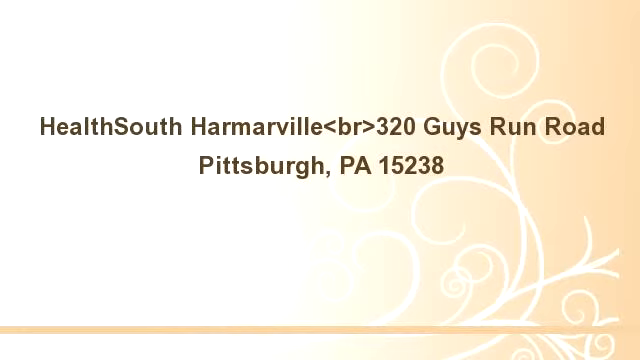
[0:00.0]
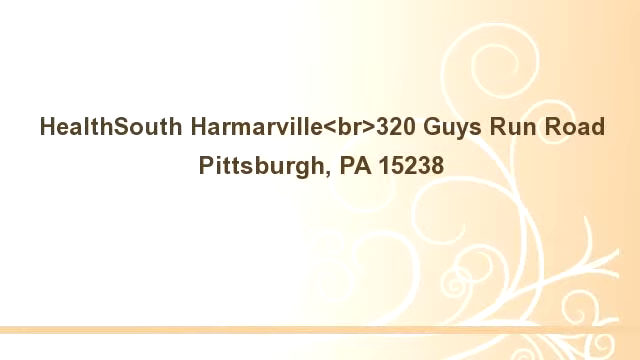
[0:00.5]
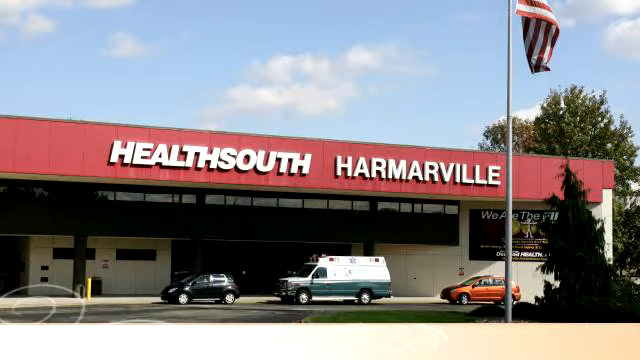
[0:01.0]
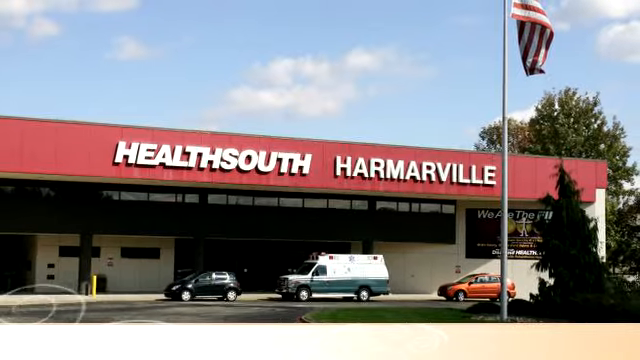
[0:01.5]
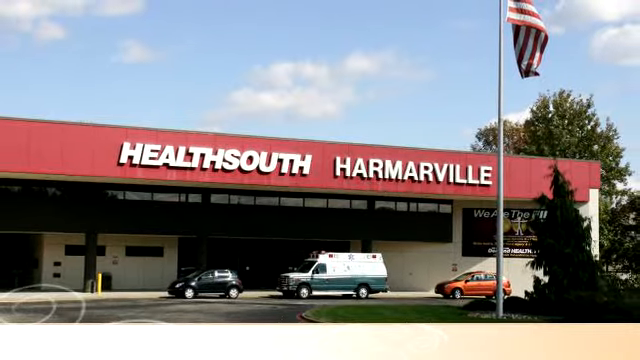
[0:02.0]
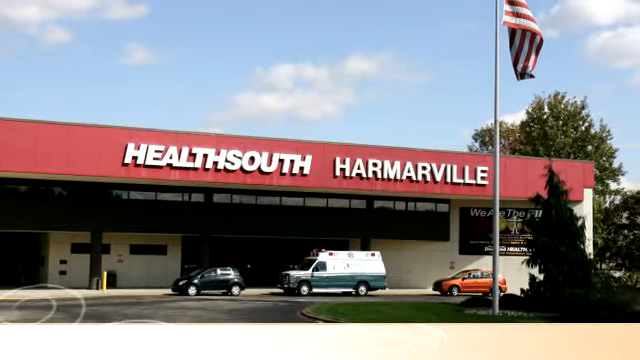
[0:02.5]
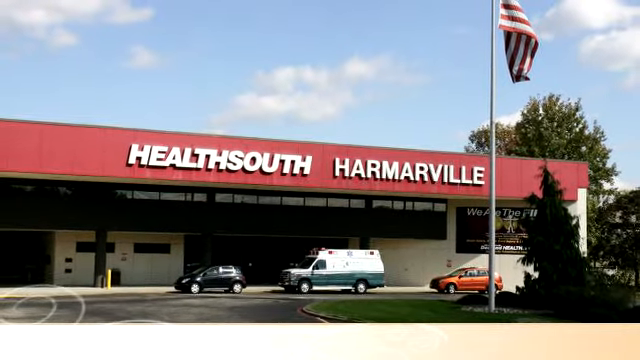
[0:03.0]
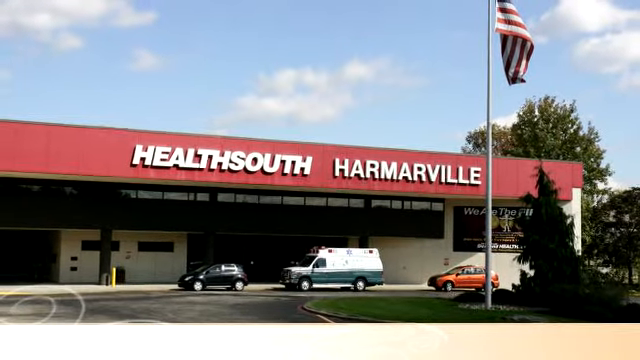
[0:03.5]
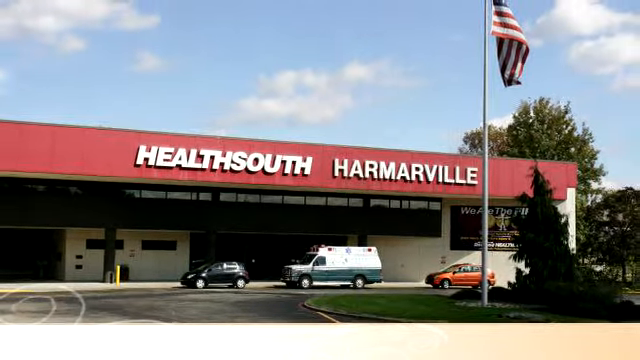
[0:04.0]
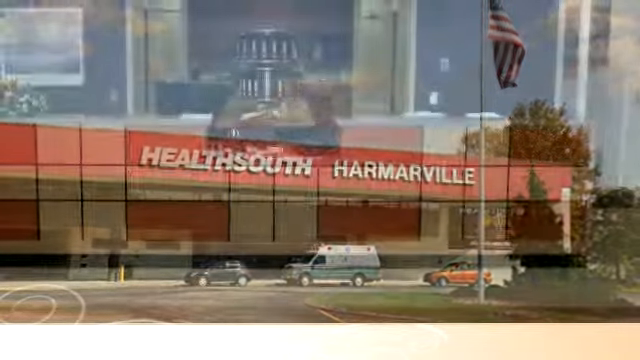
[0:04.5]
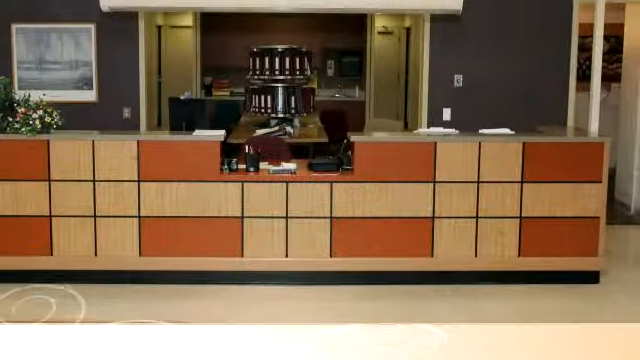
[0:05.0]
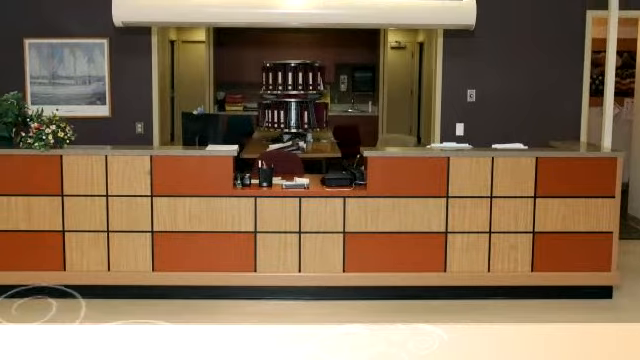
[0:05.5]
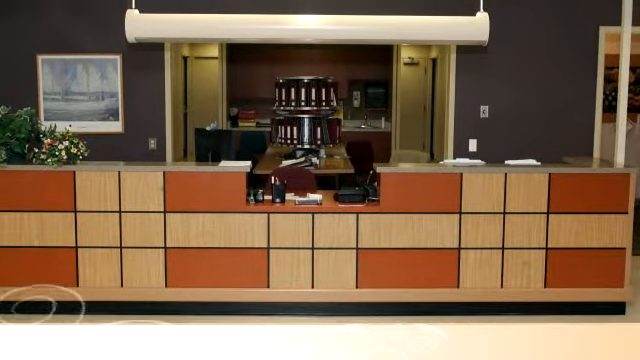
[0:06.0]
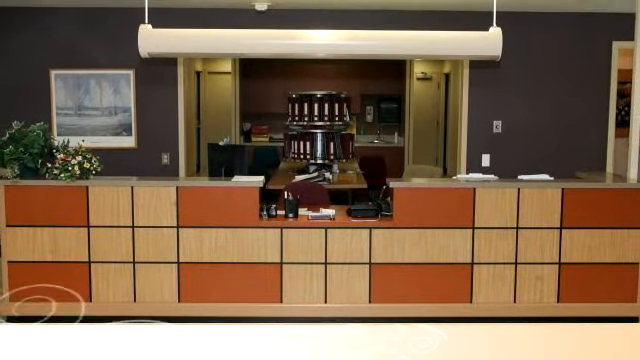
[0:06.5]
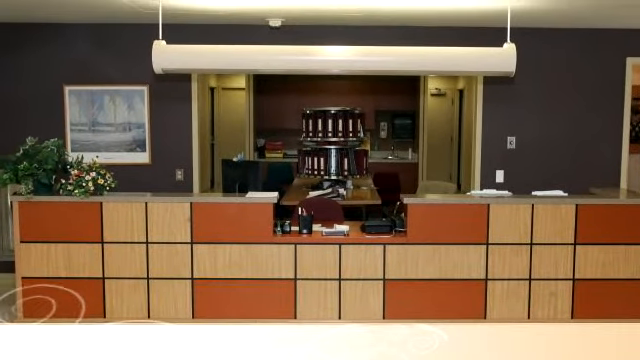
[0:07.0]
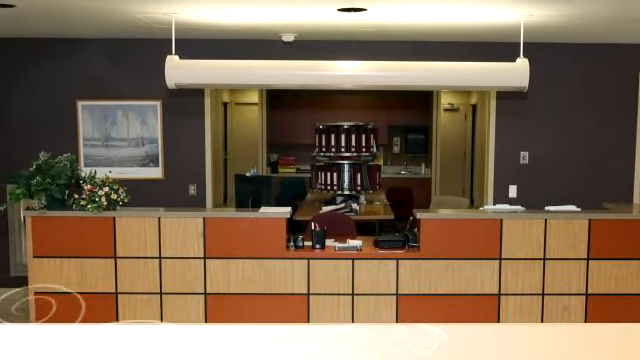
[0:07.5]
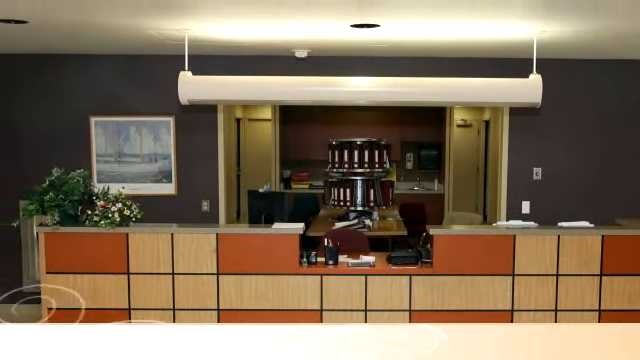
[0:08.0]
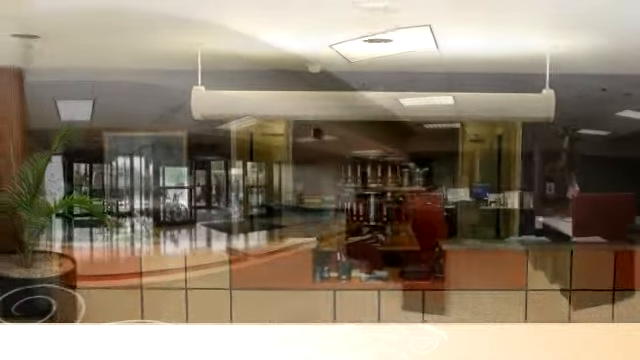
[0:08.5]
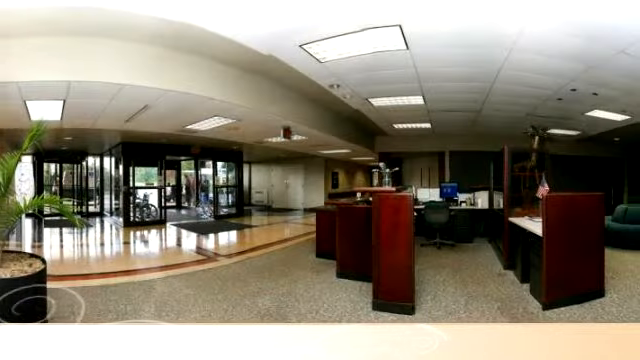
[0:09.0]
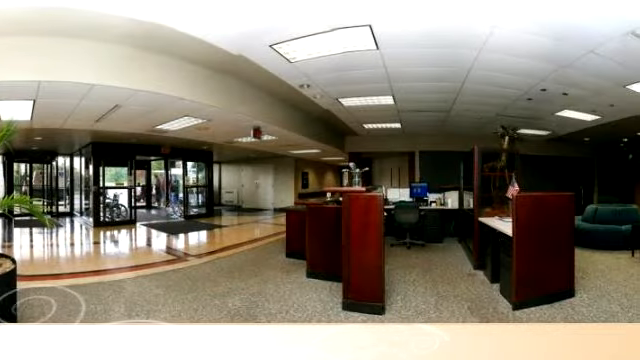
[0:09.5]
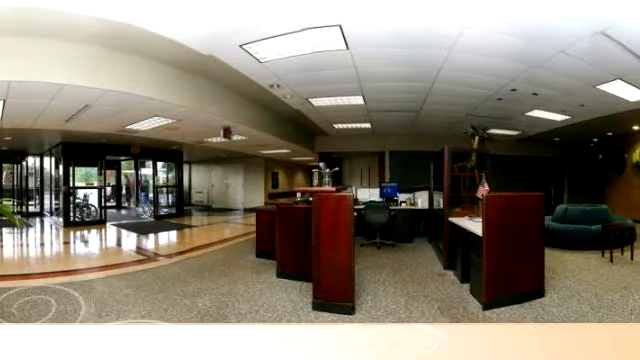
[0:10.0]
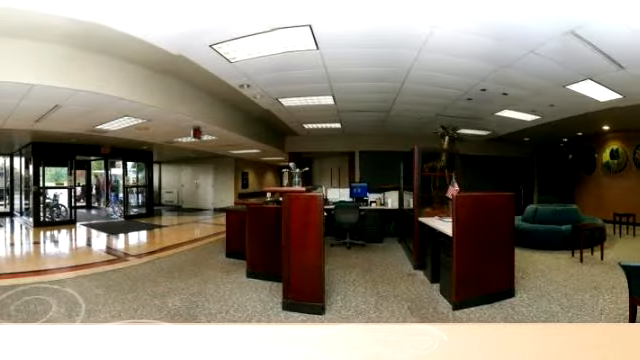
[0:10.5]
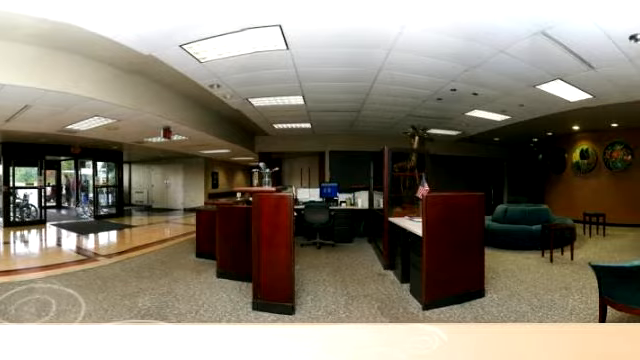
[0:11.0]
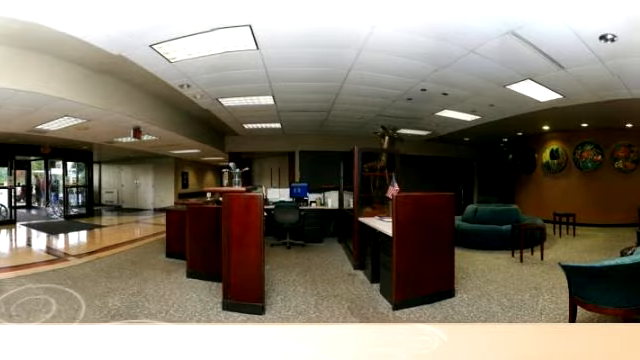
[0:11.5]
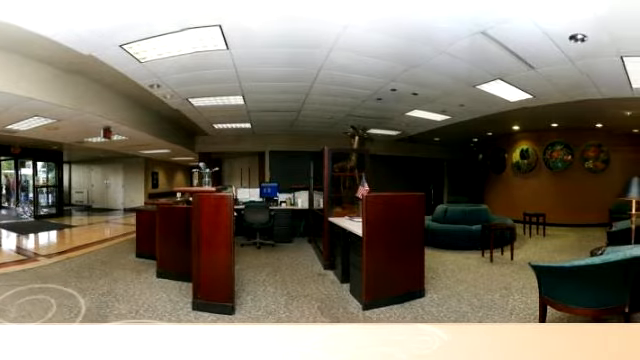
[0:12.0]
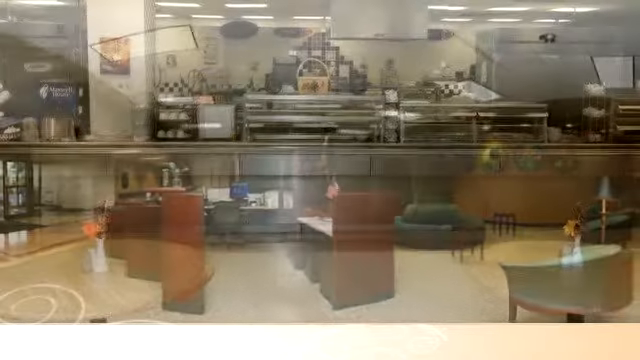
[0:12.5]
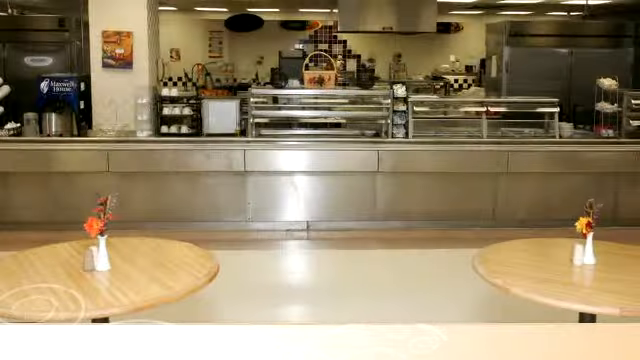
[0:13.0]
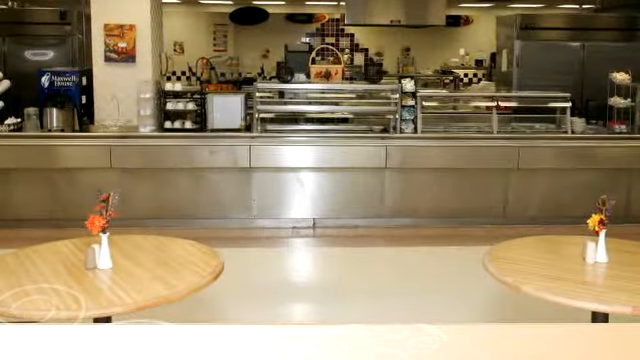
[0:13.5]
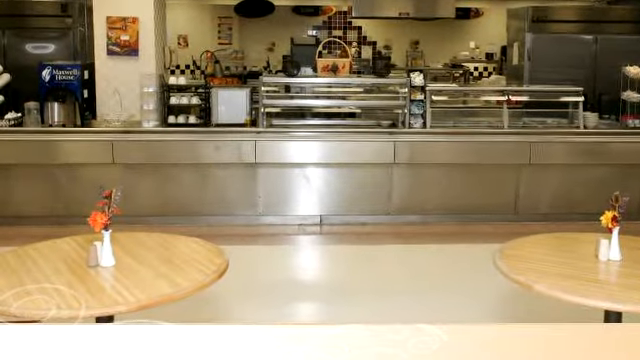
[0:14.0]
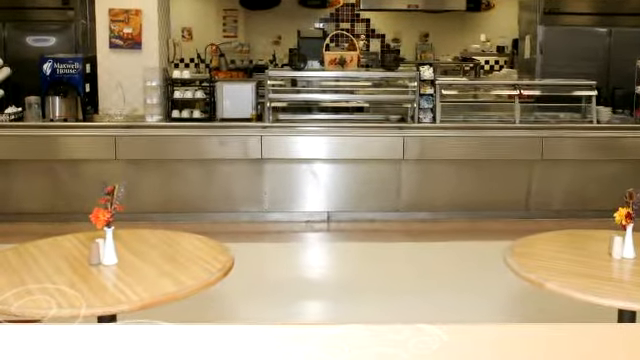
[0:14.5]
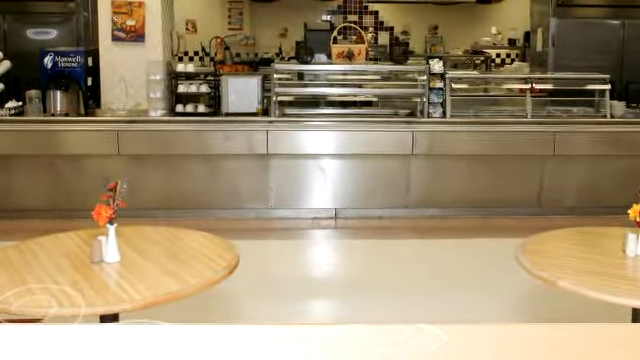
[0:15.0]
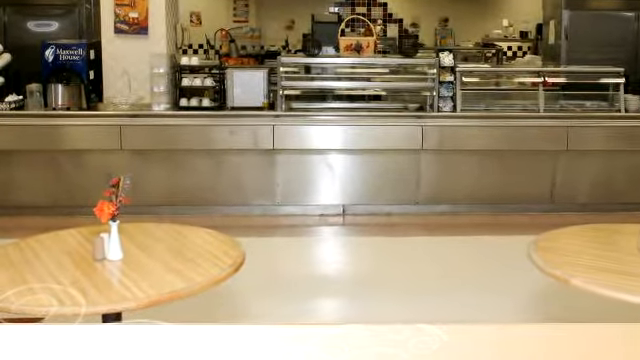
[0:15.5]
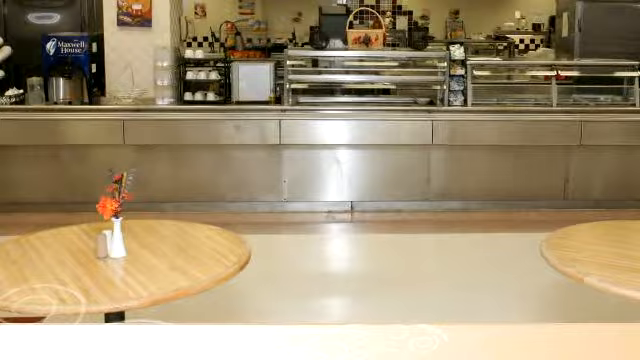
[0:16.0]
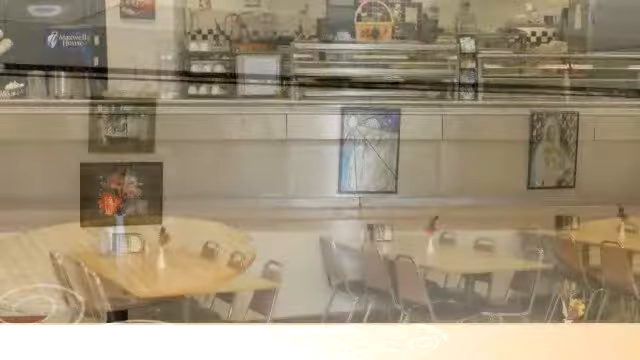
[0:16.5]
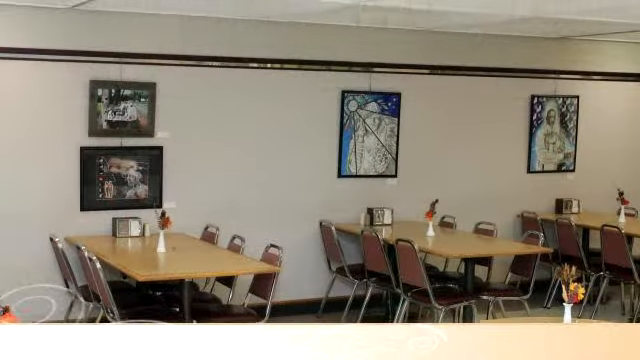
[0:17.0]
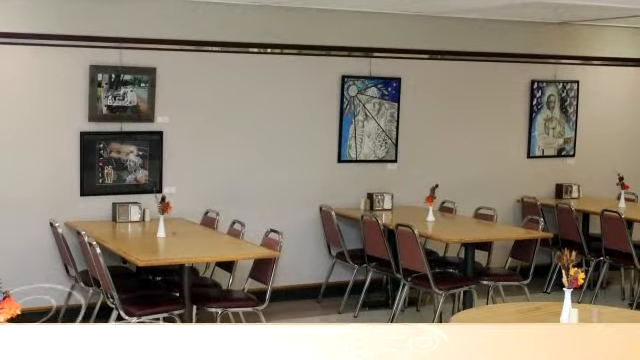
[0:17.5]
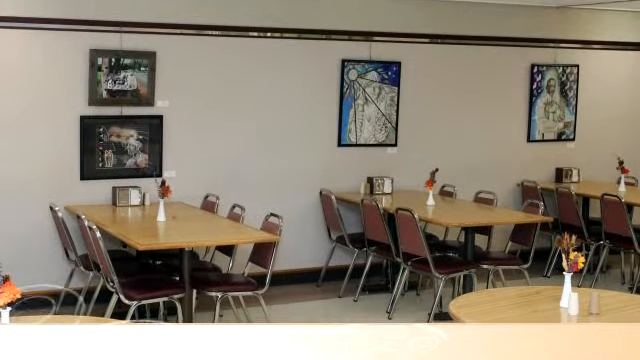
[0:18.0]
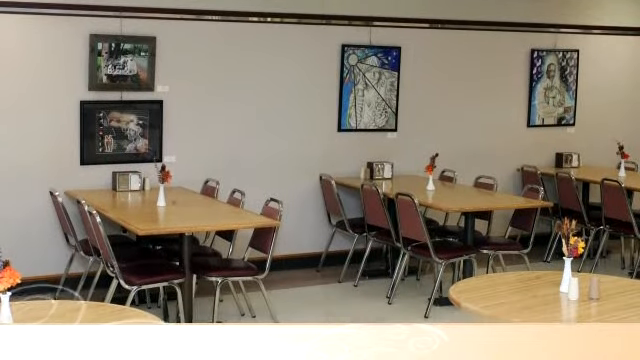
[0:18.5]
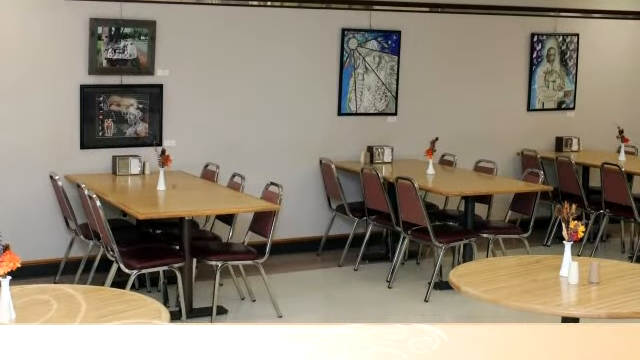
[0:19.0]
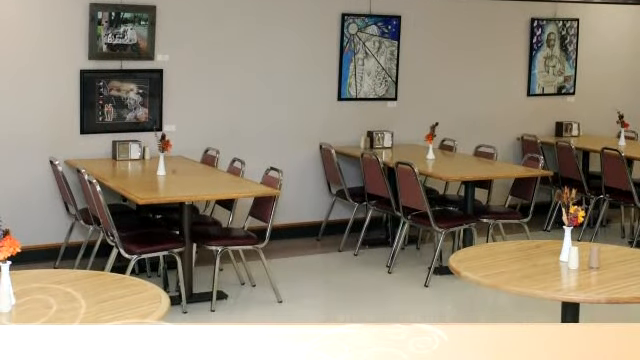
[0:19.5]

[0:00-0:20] The first screen is text on a white background with pale orange and sort of white scrolling. The text, in a light black or dark gray sort of color, reads "Health South, Harmerville, 320, Guy's Run Road, Pittsburgh, PA, 15238." The video then phases to the exterior of the building, which reads "Health South, Harmerville" in large white letters. Out front there are several parked vehicles, an American flag and the entrance. The video cuts to an interior lobby or reception desk for check-in, with multiple stations where people would sit in chairs. In the background there is a carousel of binders with files and other folders, and a large reception-style desk that rises above waist height. The camera continues to pan up and back over, showing the opposite view of the room with reception seating and other areas. It then cuts to what looks like a cafeteria, showing the main area and then all the available seating in the room.